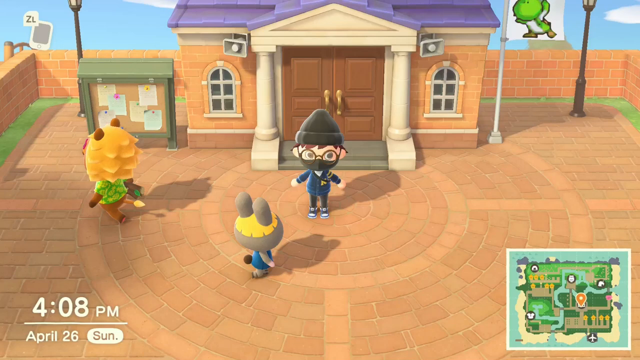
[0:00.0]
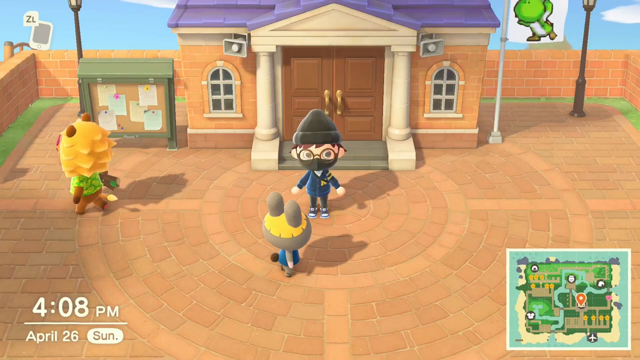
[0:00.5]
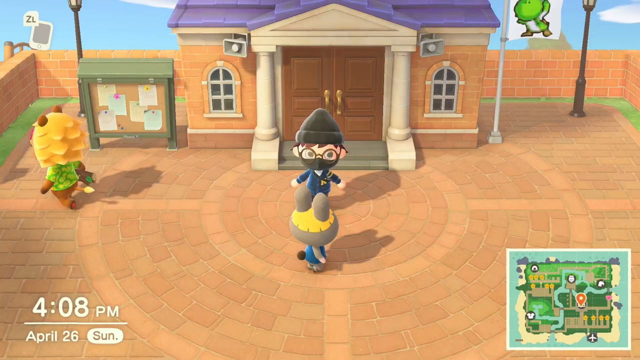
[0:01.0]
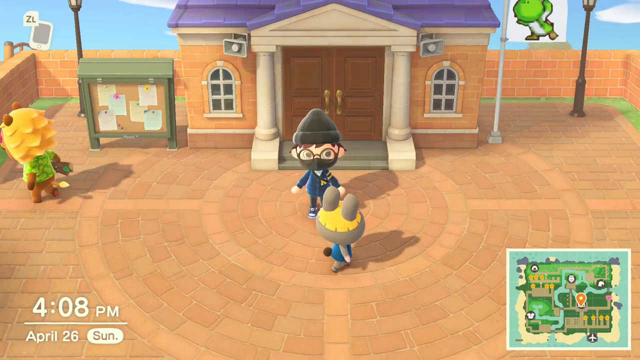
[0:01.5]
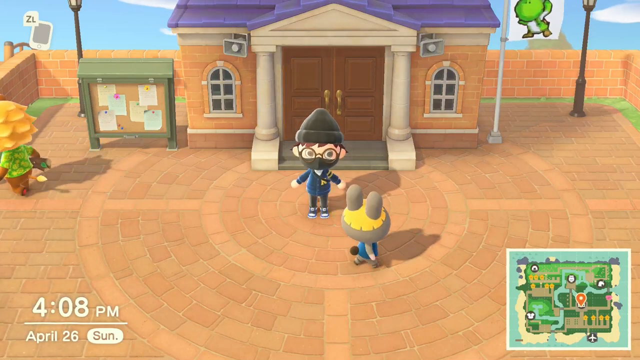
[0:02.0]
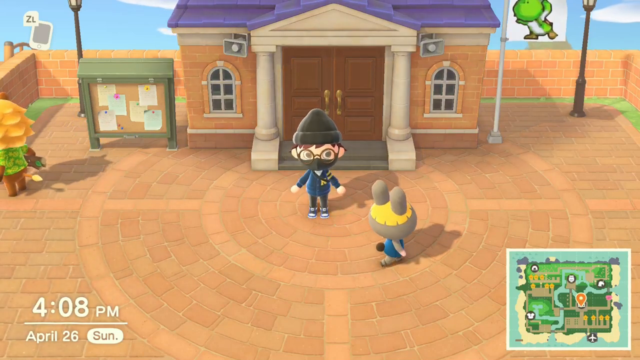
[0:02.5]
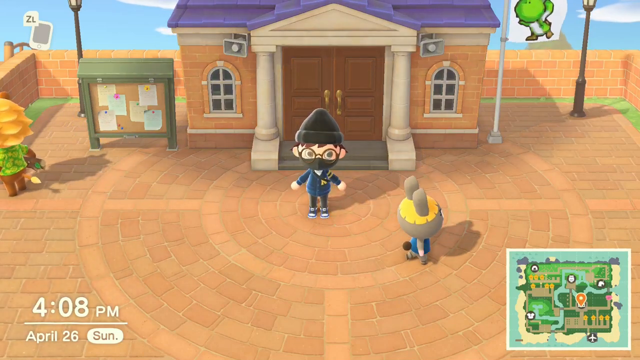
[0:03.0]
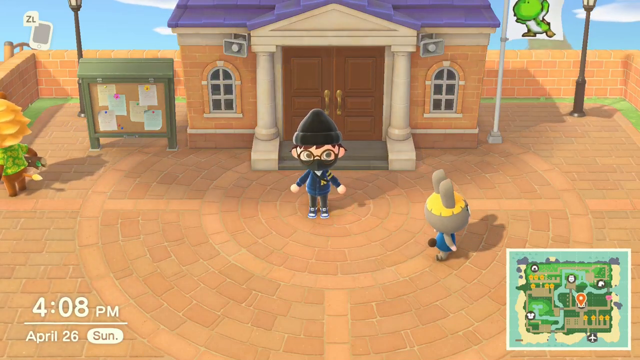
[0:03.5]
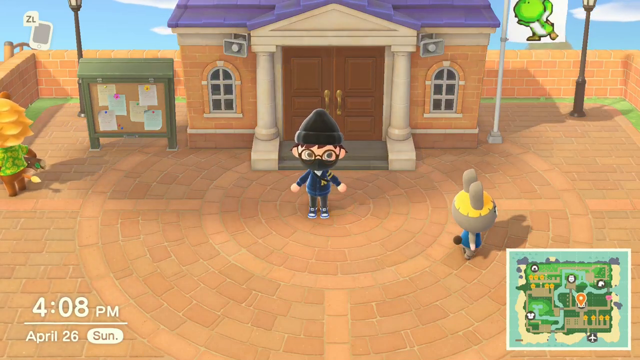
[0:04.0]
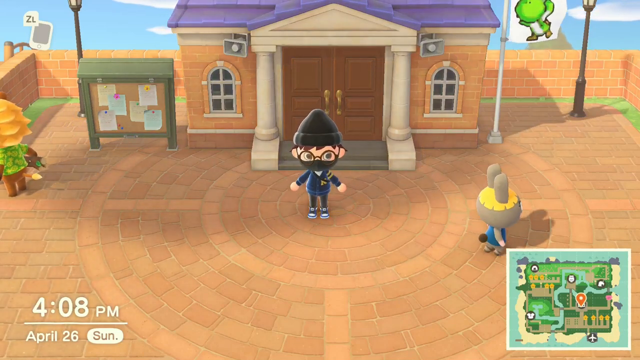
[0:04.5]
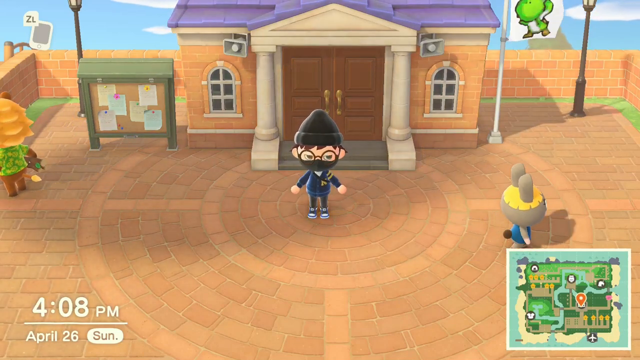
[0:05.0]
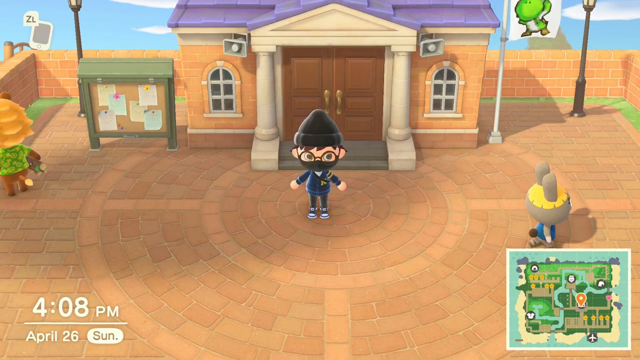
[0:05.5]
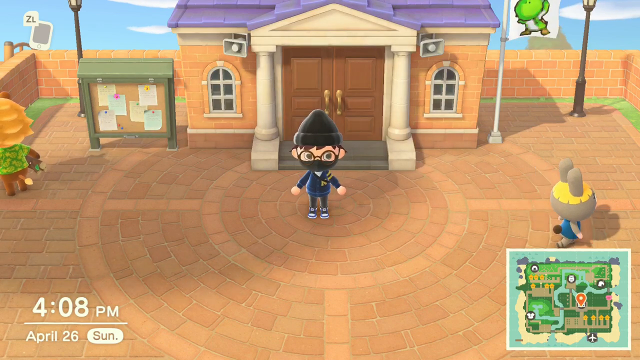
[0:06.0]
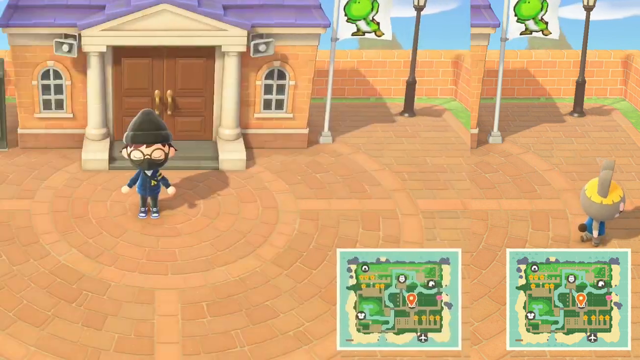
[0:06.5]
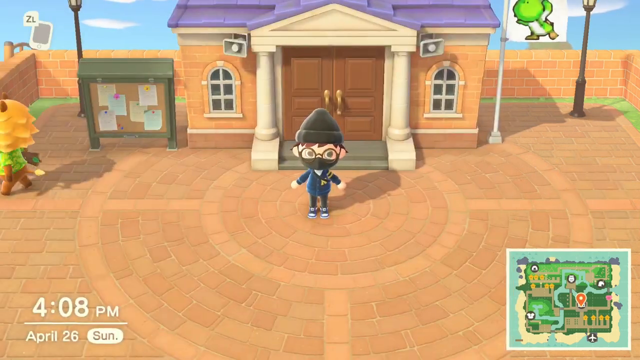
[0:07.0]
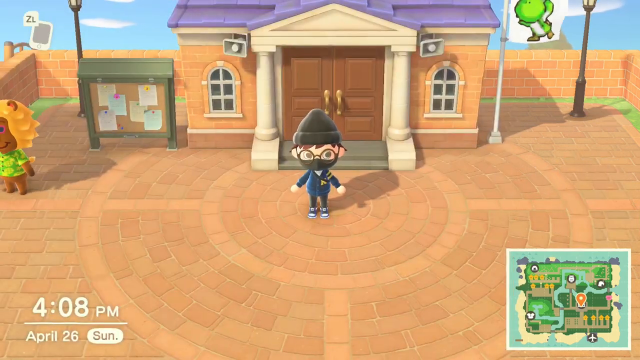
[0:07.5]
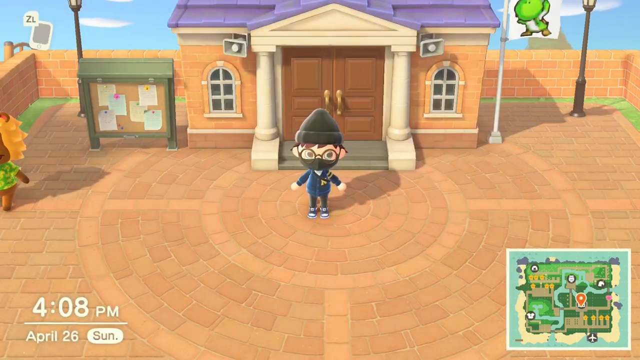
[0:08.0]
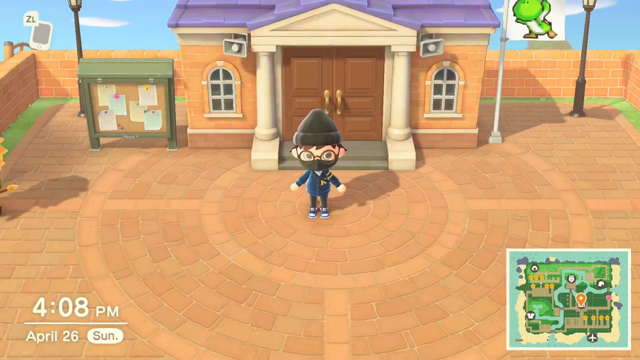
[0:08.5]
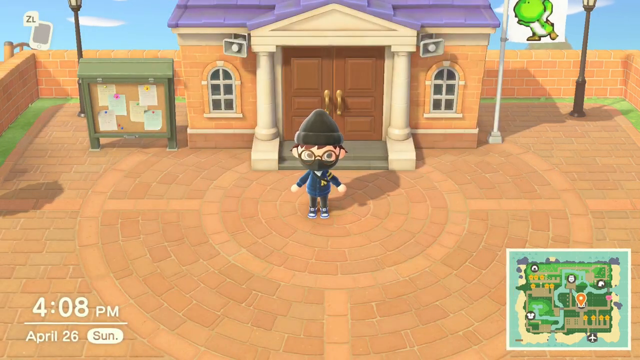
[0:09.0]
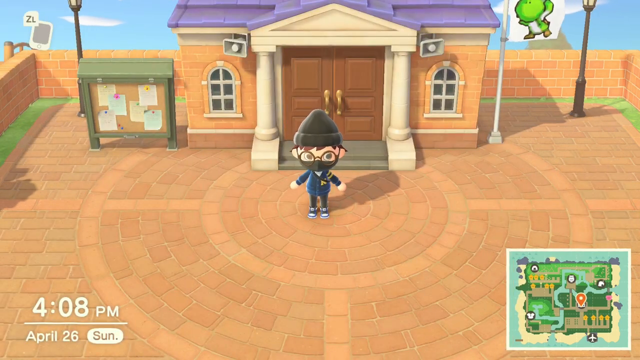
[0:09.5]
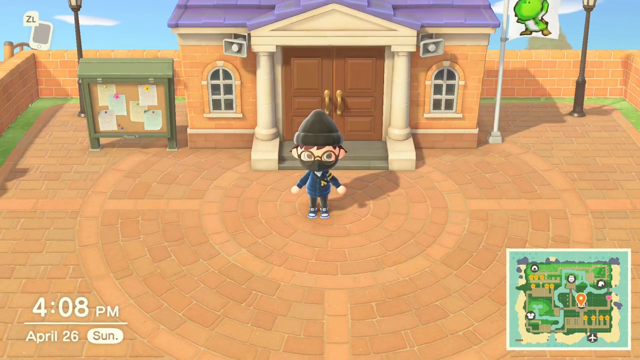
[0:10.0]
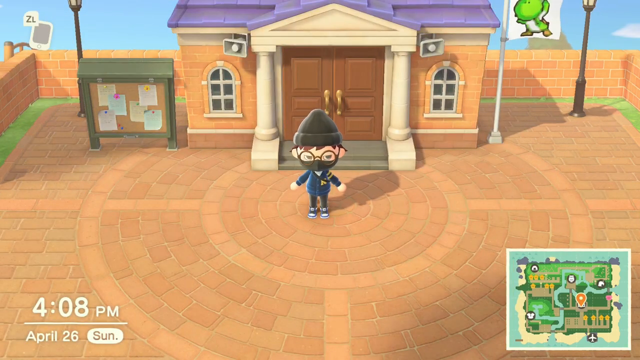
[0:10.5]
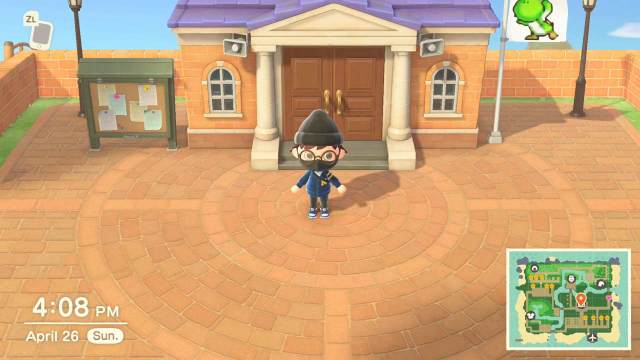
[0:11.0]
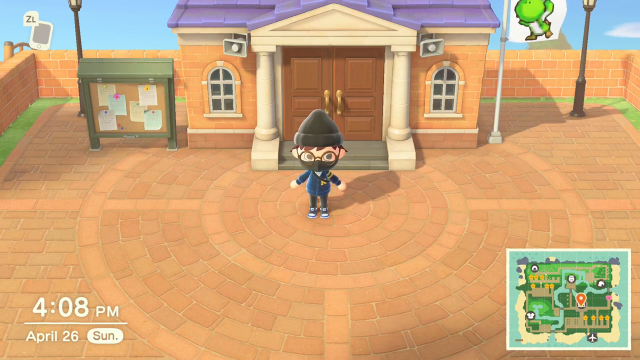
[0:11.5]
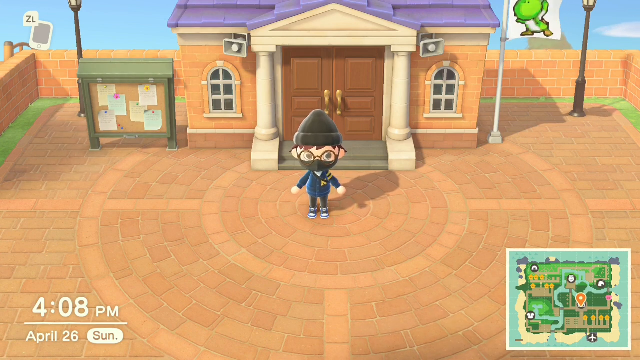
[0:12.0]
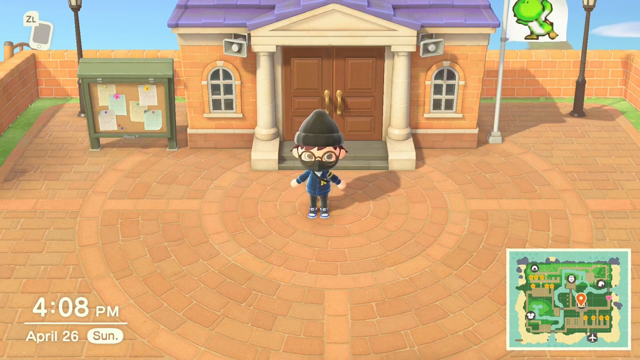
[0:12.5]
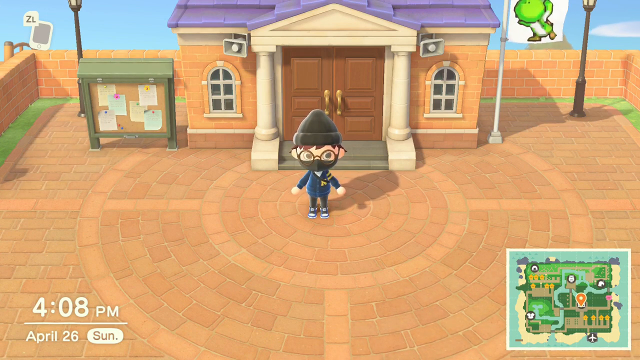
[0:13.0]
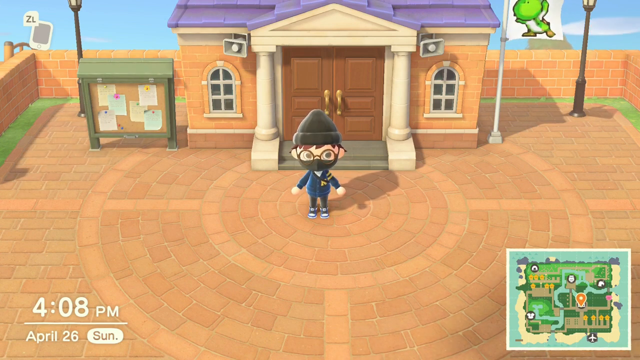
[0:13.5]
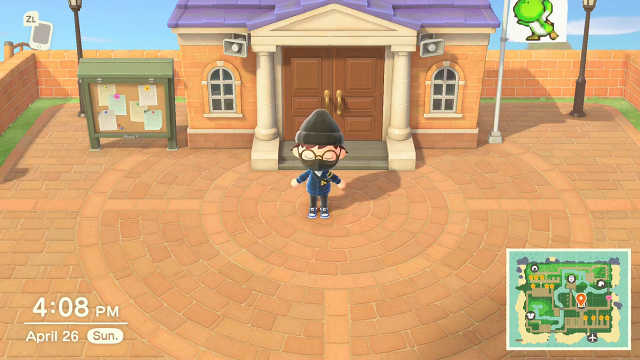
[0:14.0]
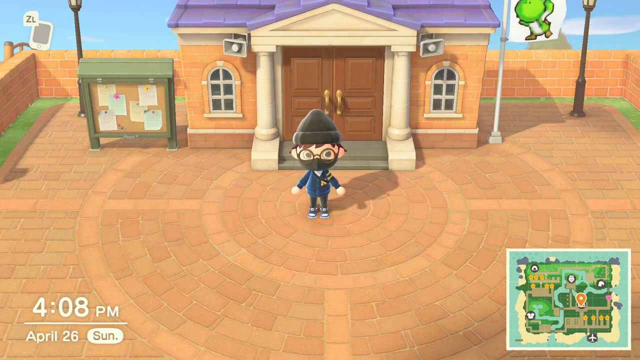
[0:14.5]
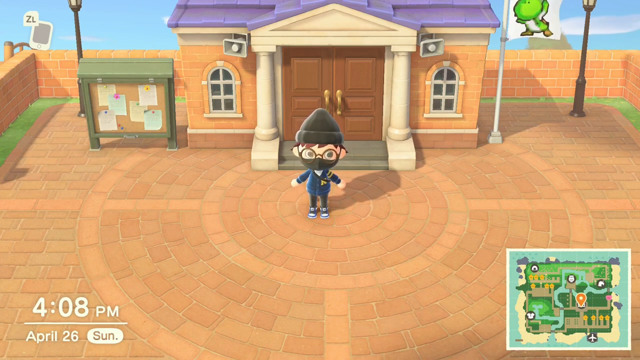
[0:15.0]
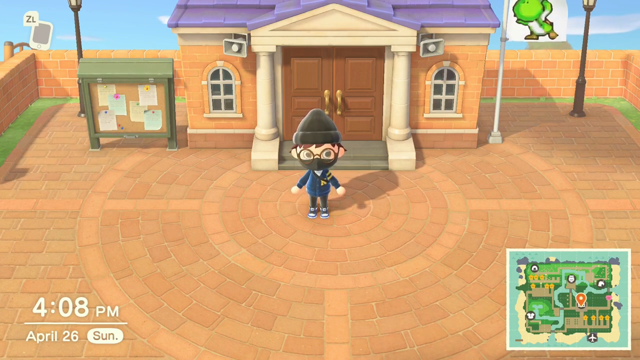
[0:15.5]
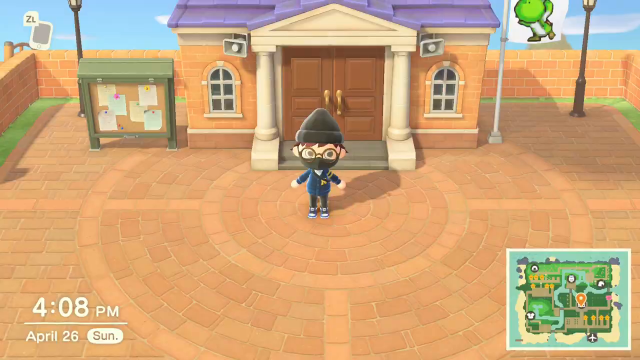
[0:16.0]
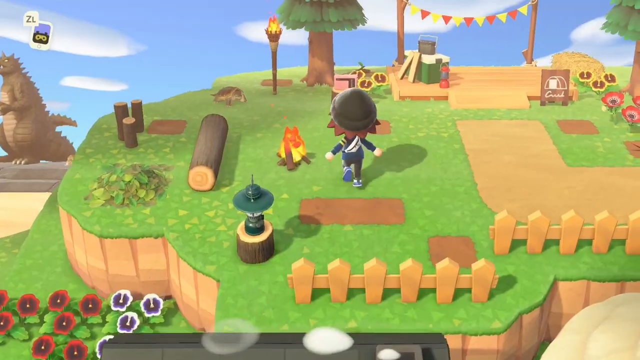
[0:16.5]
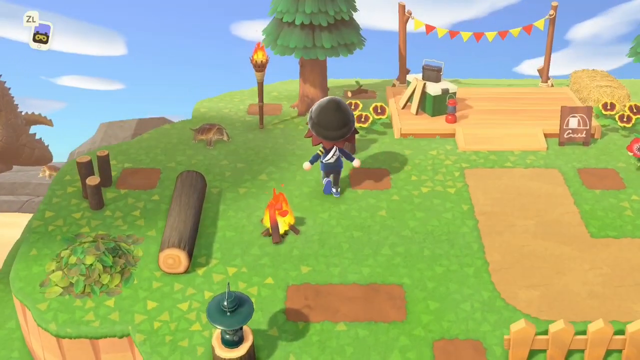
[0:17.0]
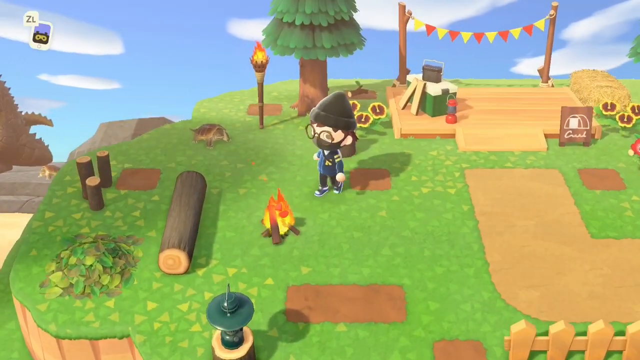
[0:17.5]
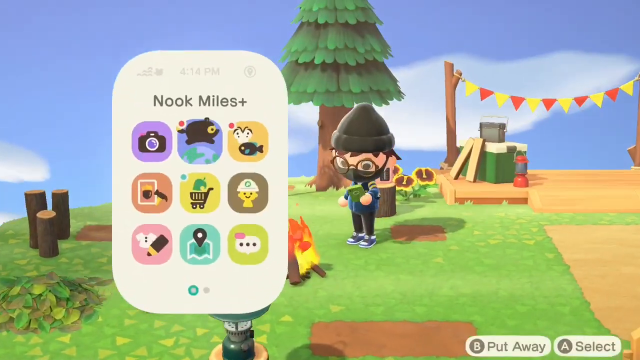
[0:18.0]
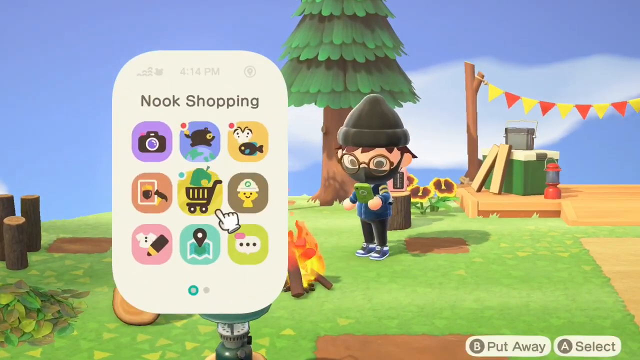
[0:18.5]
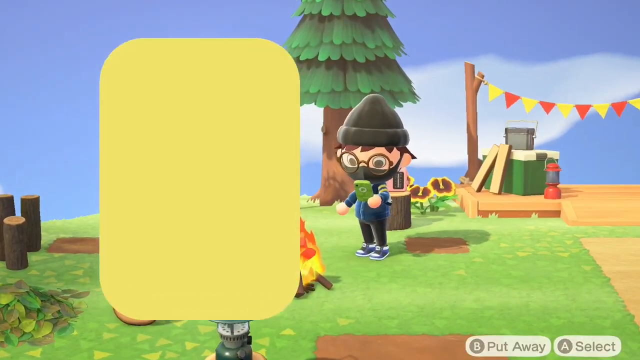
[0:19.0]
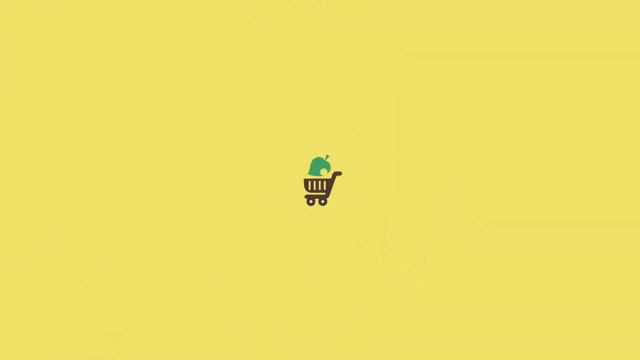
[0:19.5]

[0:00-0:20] The video shows the game Animal Crossing, opening on the center square of the villager's island. The player's character is in the center, wearing a black beanie and a black mask. A map of the island is displayed in the bottom left of the screen. Different characters walk throughout the town square, and next to the building in the center of the island there is a flag with the Nintendo character Yoshi on it. The game seems to have gone to sleep, as the character has not moved in a long time; their eyes are shut. The date and time are displayed as text in the bottom left of the screen. The shadows of the characters walking around are visible, as are clouds moving through the sky above the island. The character is seen on their island, going through the different settings.